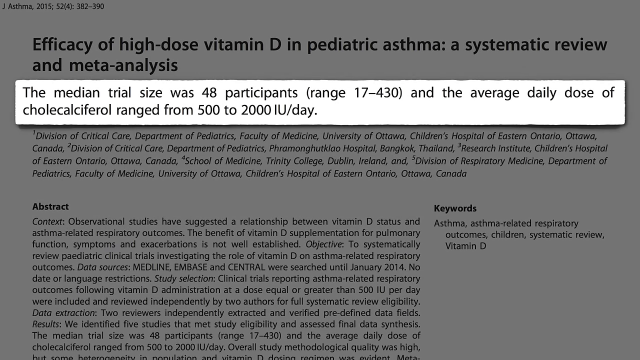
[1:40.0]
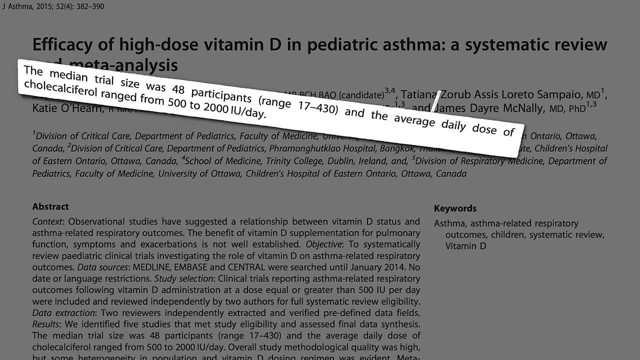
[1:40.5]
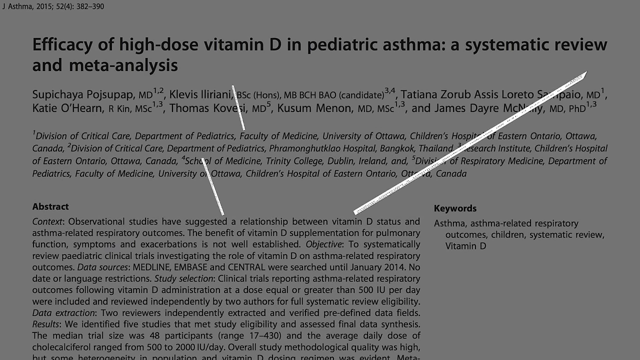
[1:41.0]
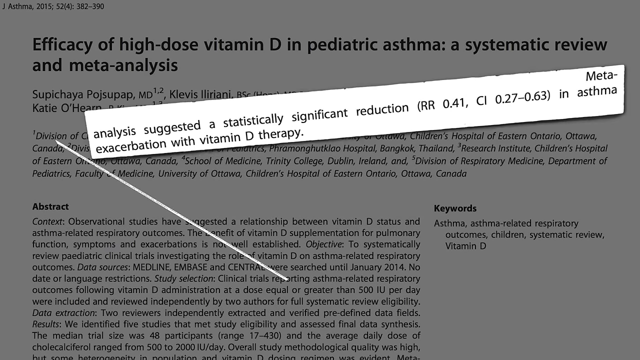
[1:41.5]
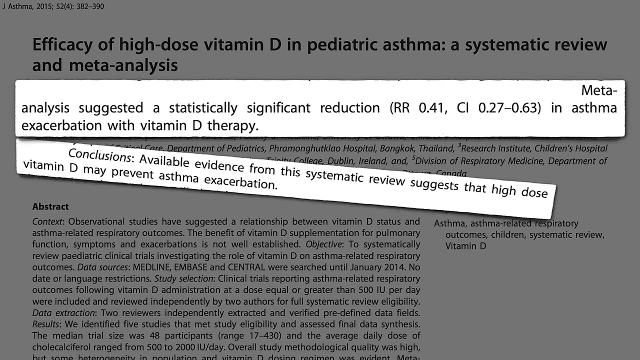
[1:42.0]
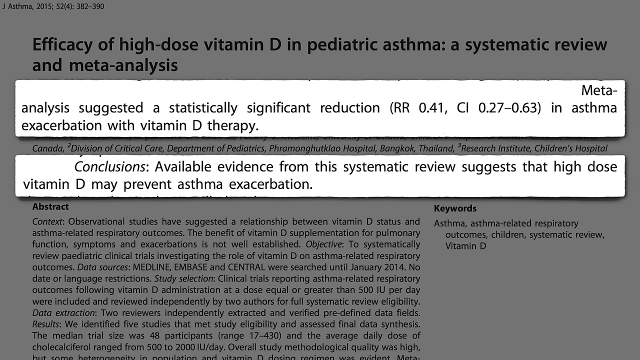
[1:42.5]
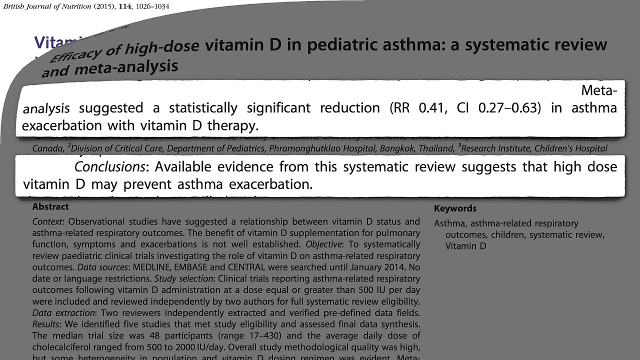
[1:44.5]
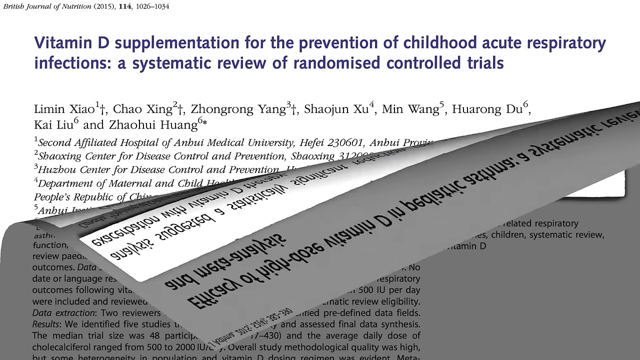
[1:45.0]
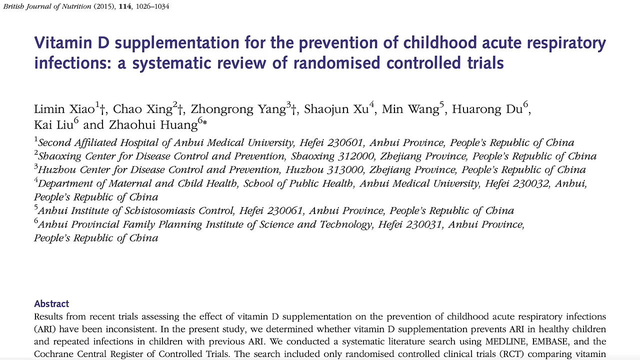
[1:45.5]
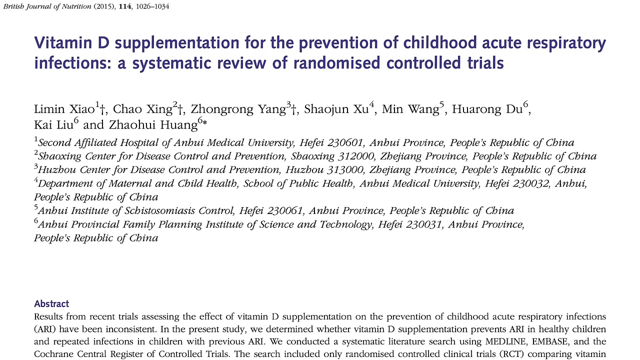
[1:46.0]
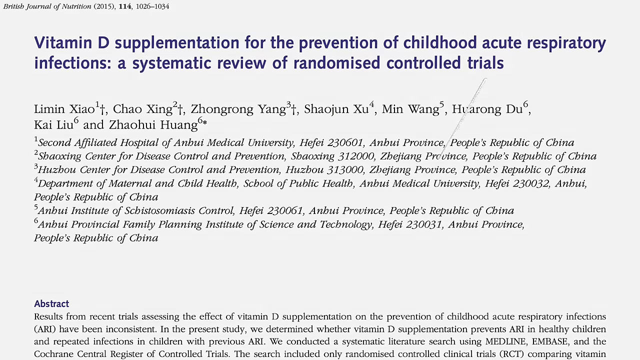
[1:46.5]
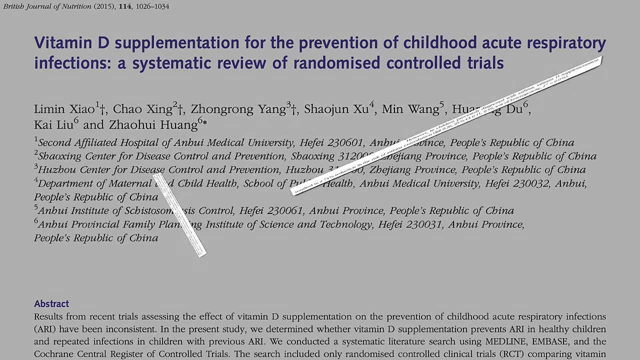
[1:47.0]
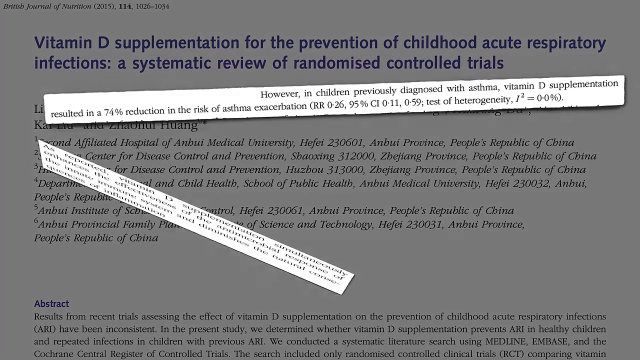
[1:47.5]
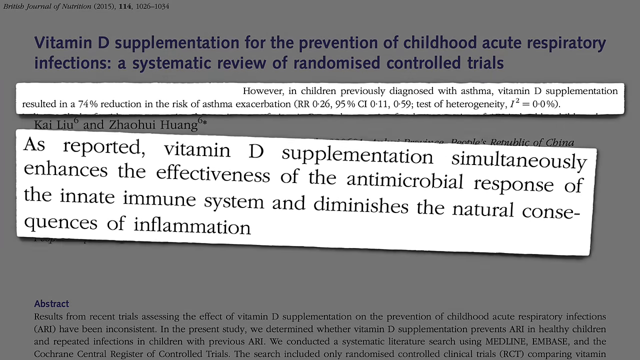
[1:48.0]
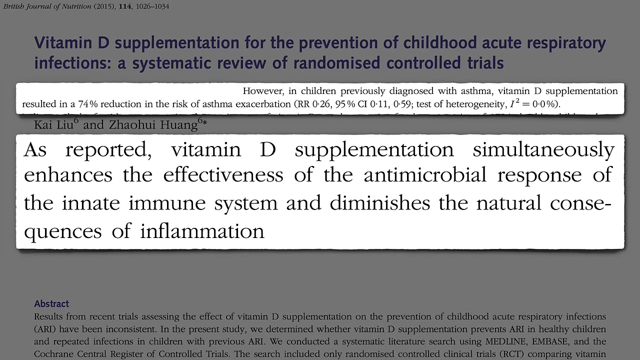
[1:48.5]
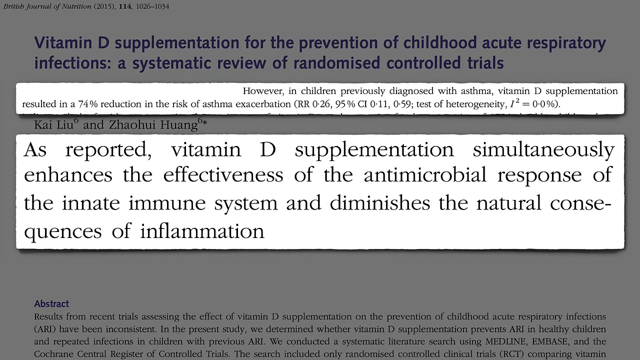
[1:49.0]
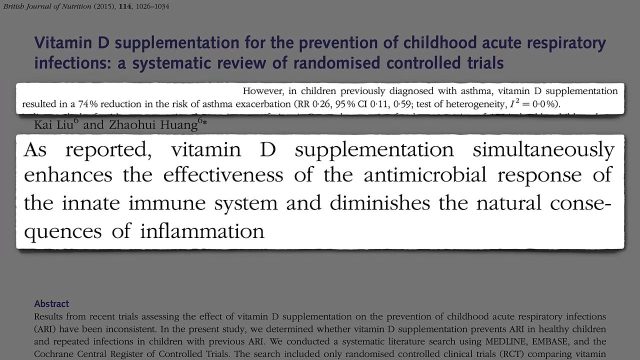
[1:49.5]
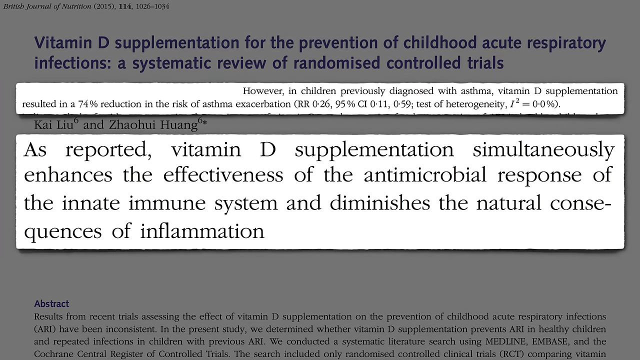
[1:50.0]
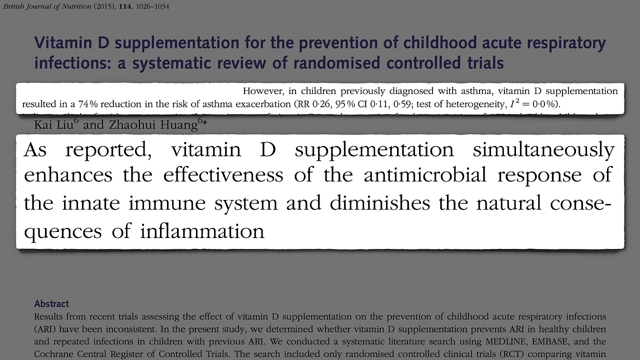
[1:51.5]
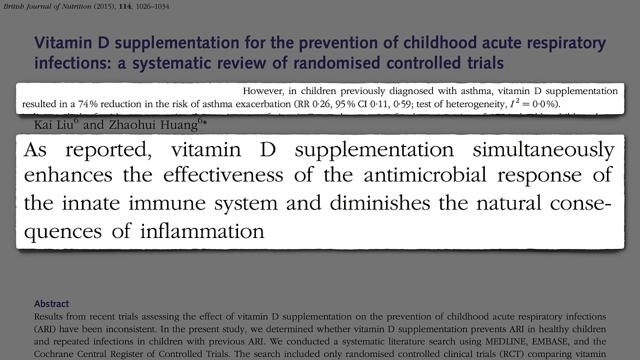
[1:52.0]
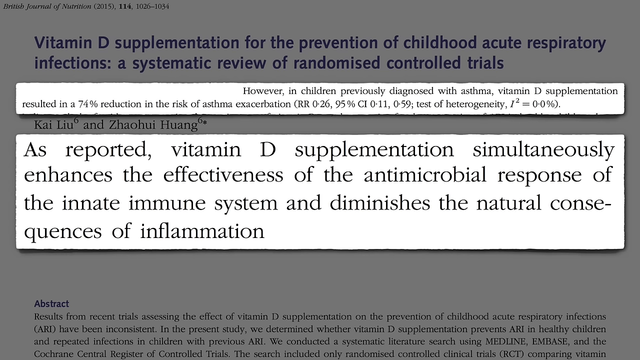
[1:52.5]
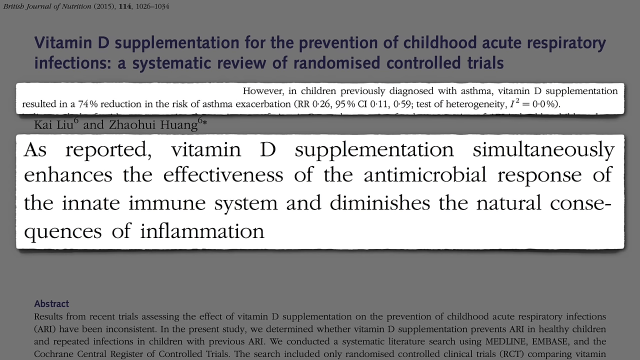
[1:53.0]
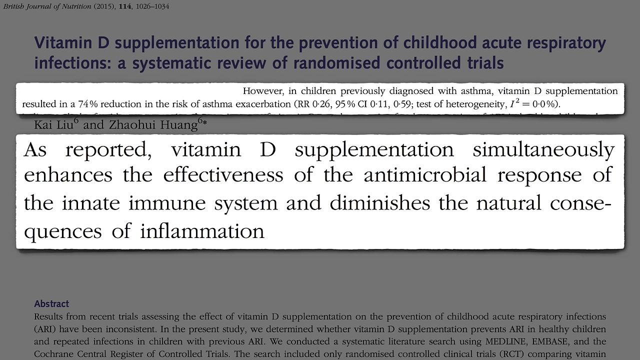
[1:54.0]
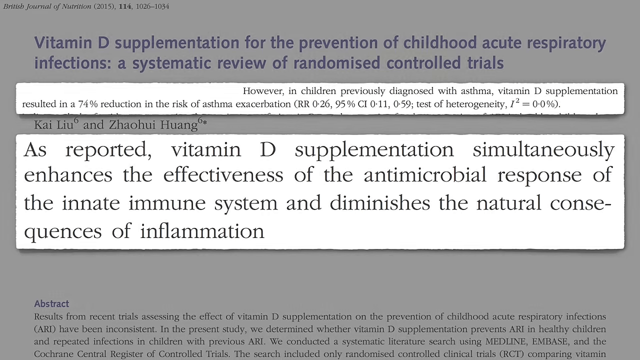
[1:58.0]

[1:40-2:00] In the background is an article titled "efficacy of high-dose vitamin D in pediatric asthma, a systematic review and meta-analysis", with the article shown below the headline. In the center of the screen an excerpt reads "the median trial size was 48 participants, and the average daily dose of cholecalciferol ranged from 500 to 2,000 IU per day." After it leaves the screen, two new excerpts emerge. The first says "Meta-analysis suggested a statistically significant reduction in asthma exacerbation with vitamin D therapy", and the one just below it reads "conclusions Available evidence from the systematic review suggests that high-dose vitamin D may prevent asthma exacerbation". The page then peels away to reveal a new article, with blue font at the top reading "vitamin D supplementation for the prevention of childhood acute respiratory infections a systematic review of randomized controlled trials". Two new excerpts appear in the center of the screen. The first reads "however, in children previously diagnosed with asthma, vitamin D supplementation resulted in a 74% reduction in the risk of asthma exacerbation." The one just below it, in larger font, reads "as reported, vitamin D supplementation simultaneously enhances the effectiveness of the antimicrobial response of the innate immune system and diminishes the natural consequences of inflammation."